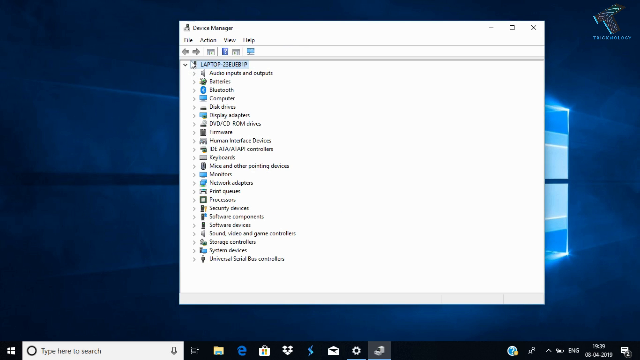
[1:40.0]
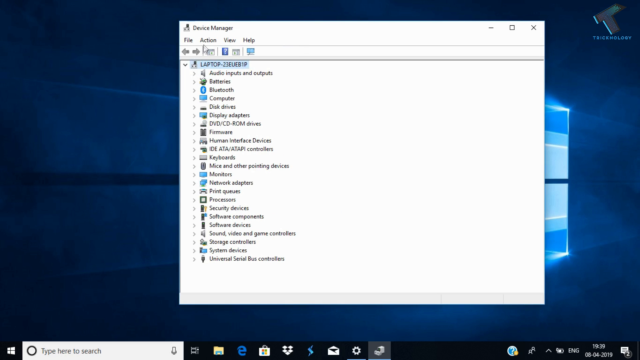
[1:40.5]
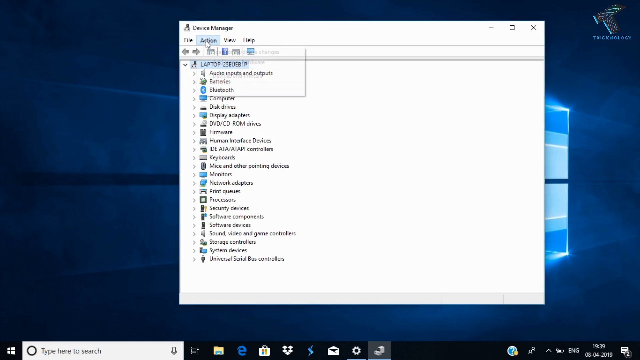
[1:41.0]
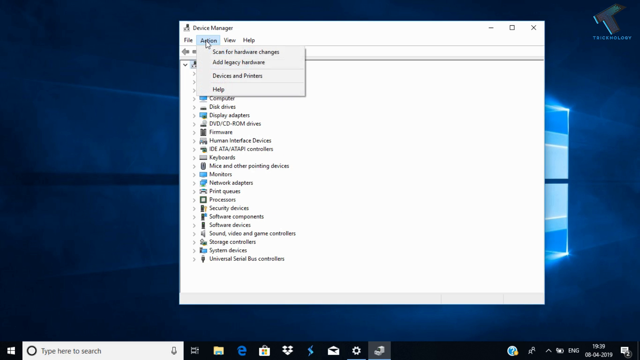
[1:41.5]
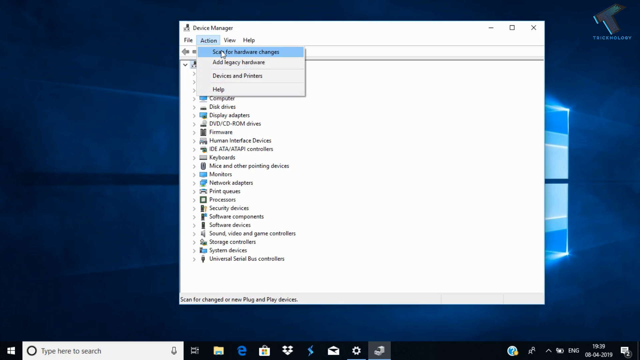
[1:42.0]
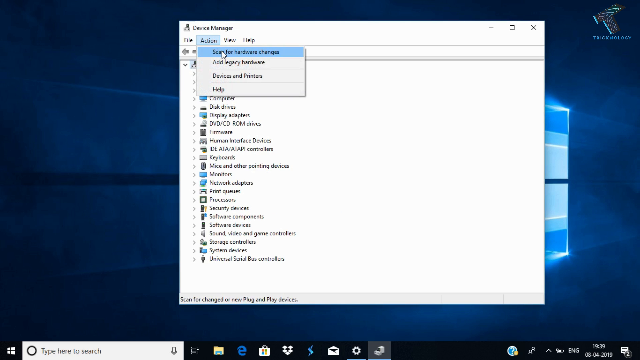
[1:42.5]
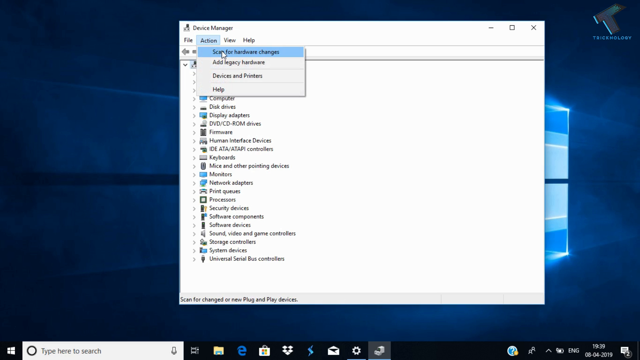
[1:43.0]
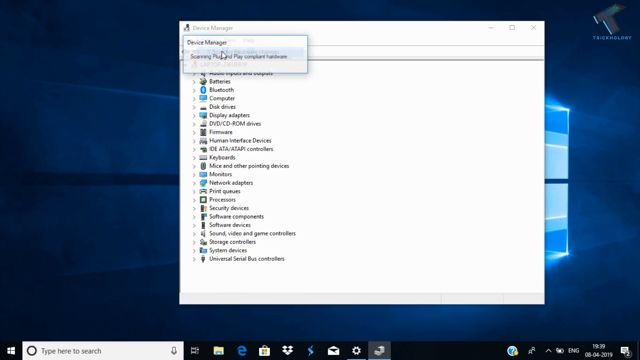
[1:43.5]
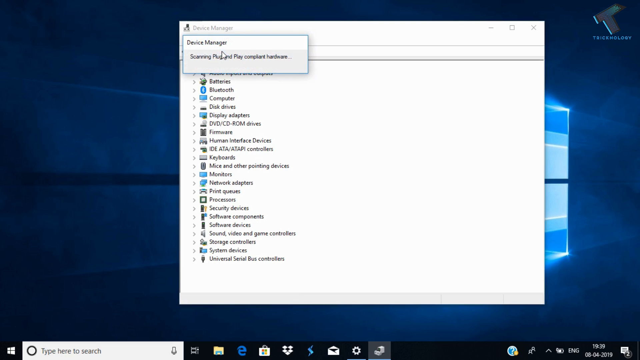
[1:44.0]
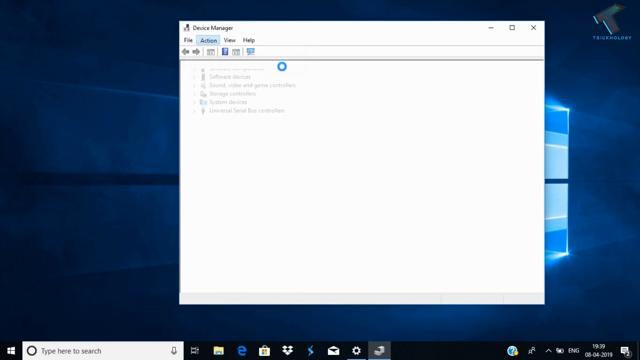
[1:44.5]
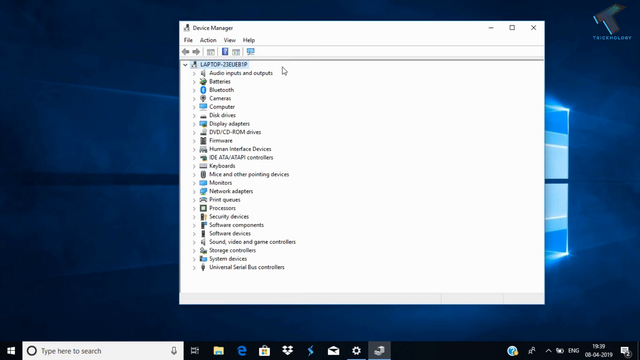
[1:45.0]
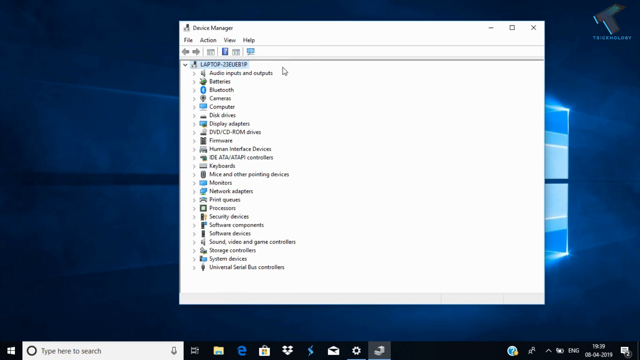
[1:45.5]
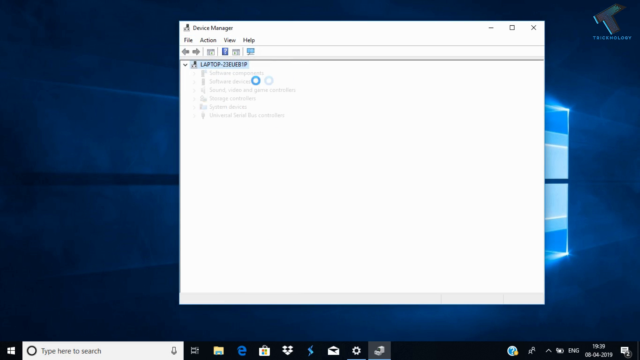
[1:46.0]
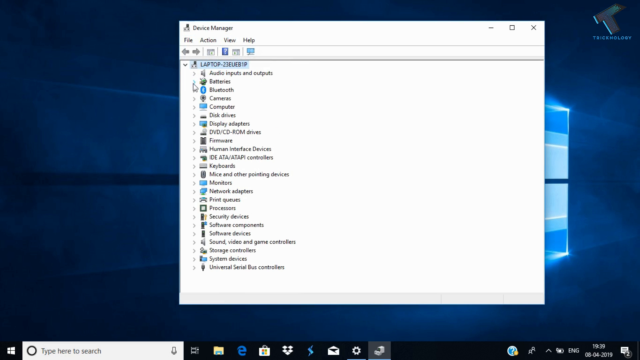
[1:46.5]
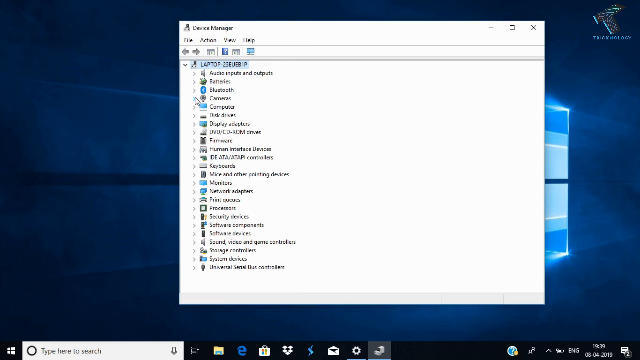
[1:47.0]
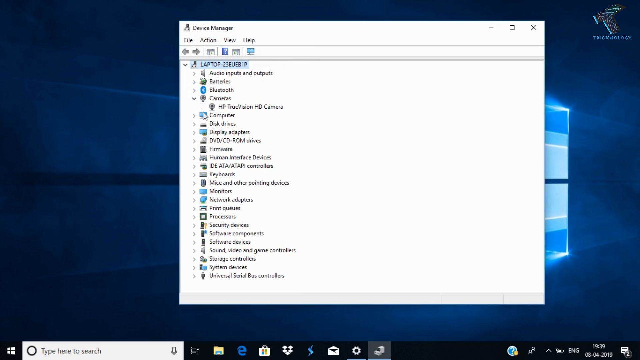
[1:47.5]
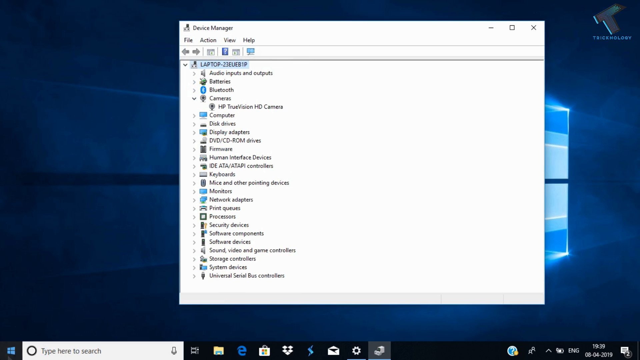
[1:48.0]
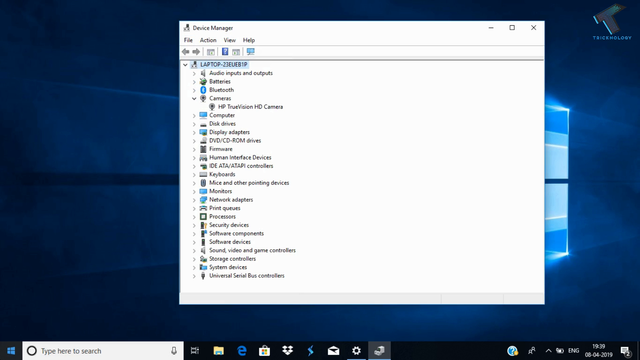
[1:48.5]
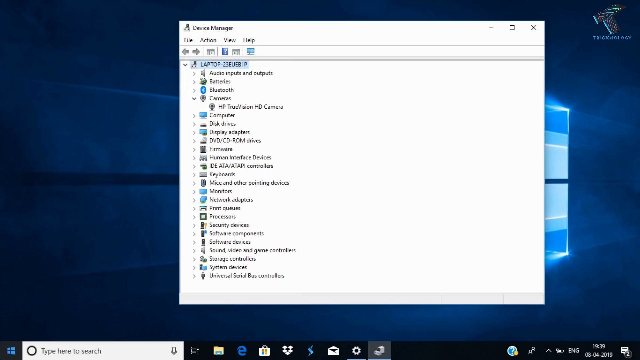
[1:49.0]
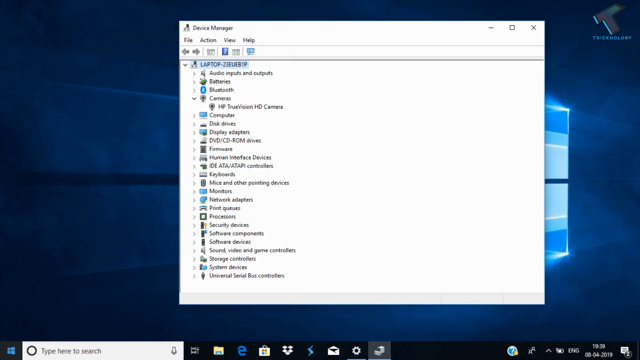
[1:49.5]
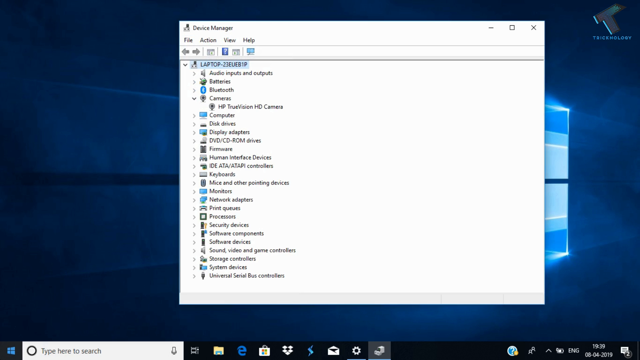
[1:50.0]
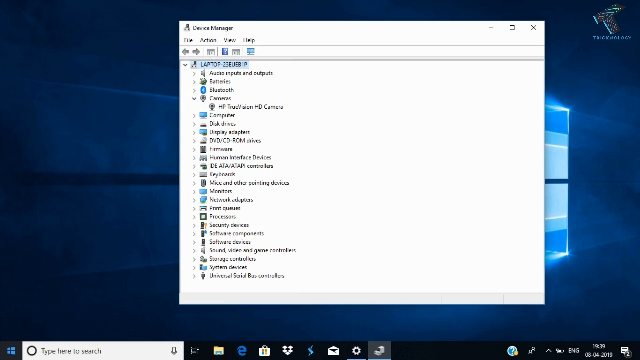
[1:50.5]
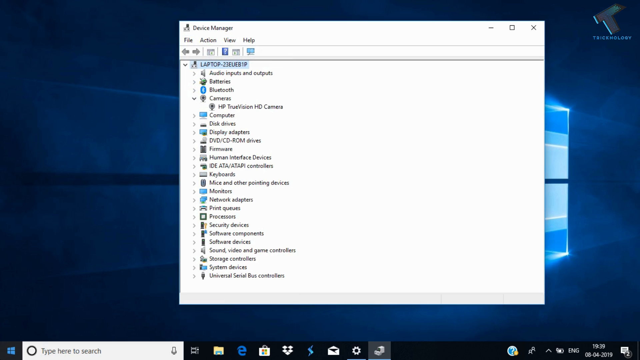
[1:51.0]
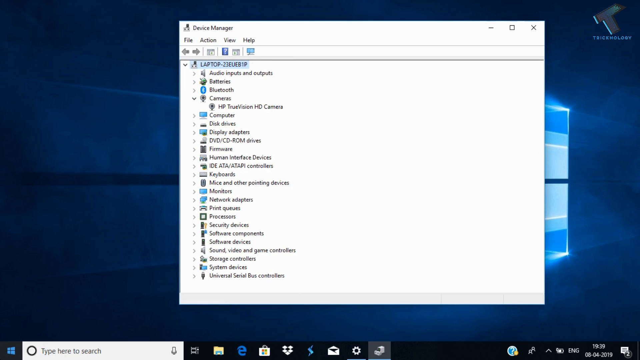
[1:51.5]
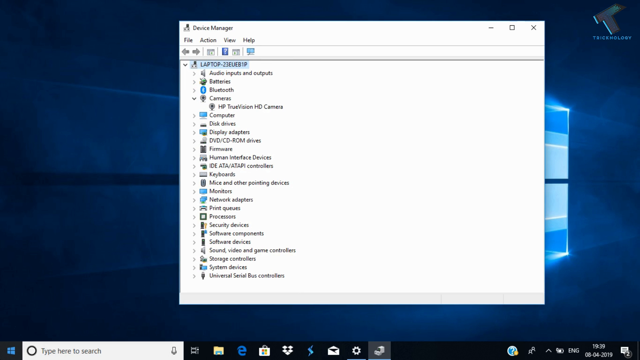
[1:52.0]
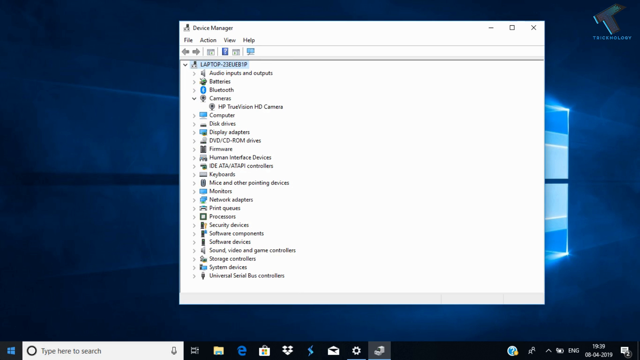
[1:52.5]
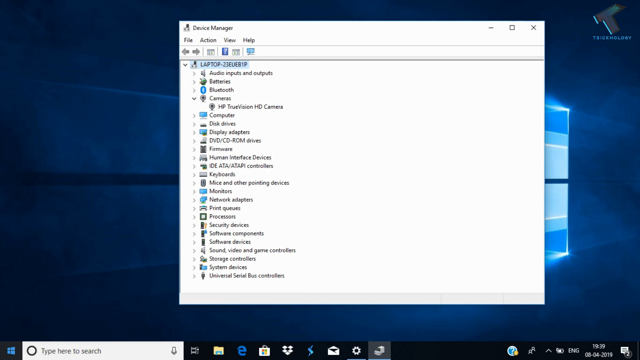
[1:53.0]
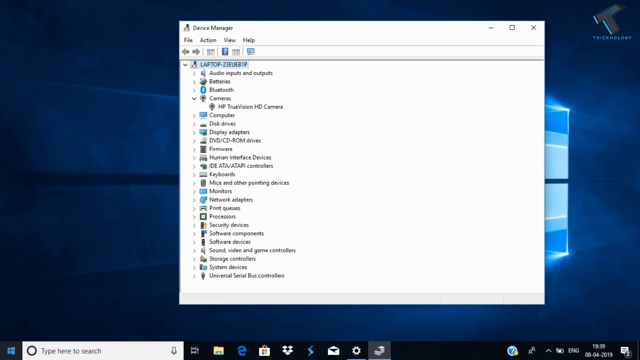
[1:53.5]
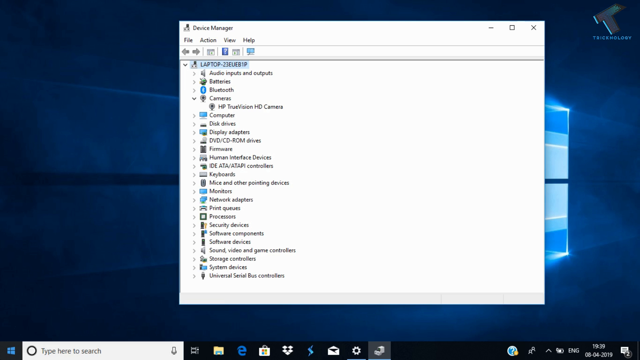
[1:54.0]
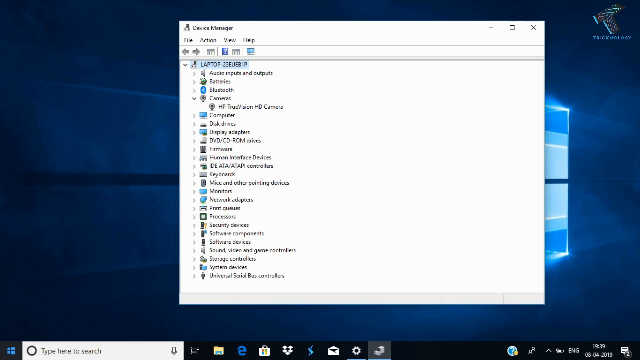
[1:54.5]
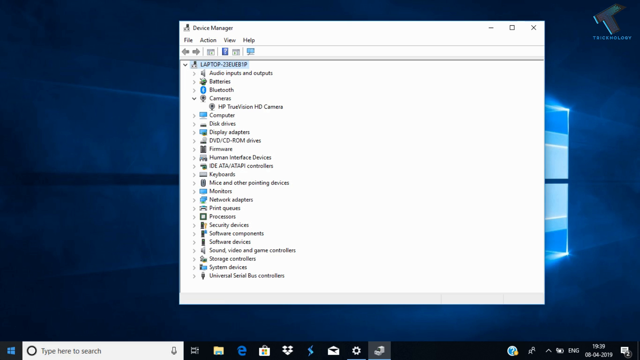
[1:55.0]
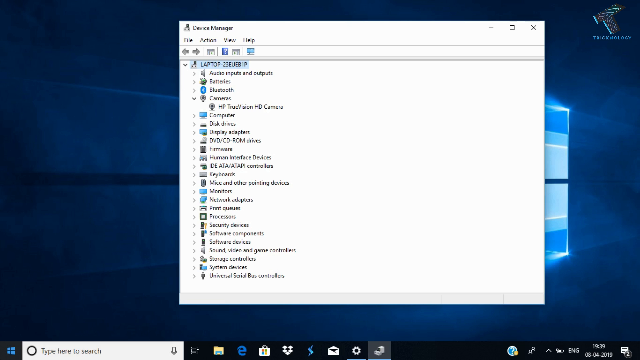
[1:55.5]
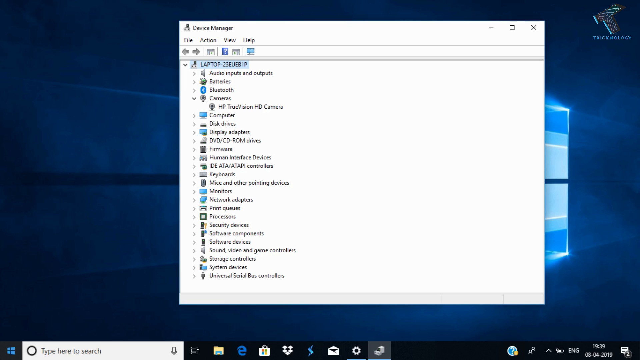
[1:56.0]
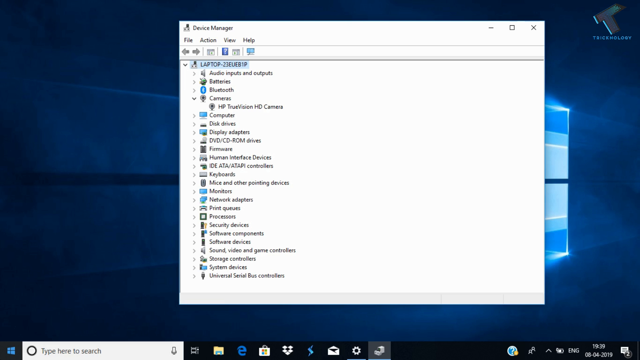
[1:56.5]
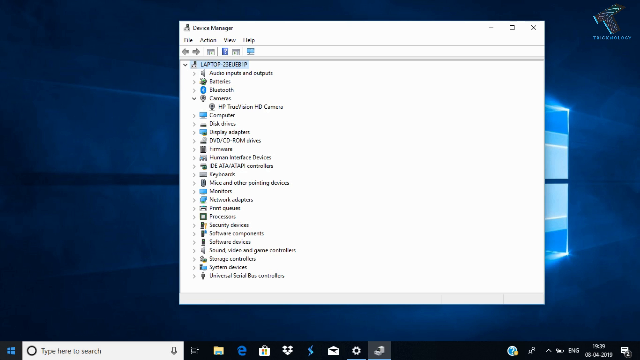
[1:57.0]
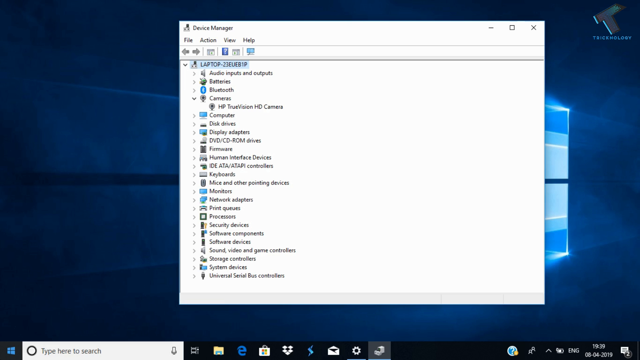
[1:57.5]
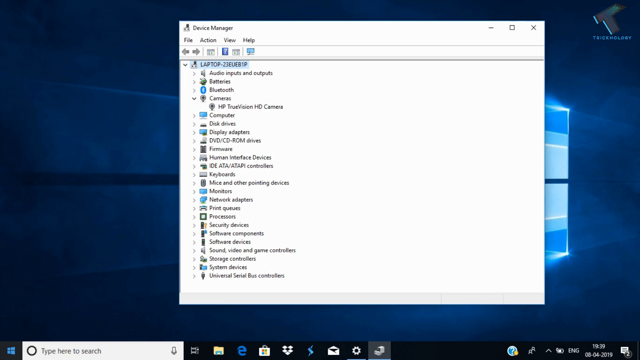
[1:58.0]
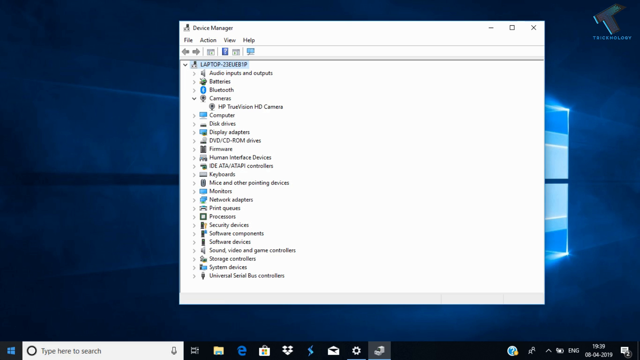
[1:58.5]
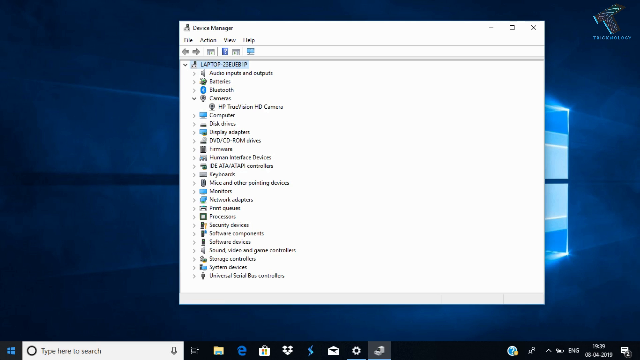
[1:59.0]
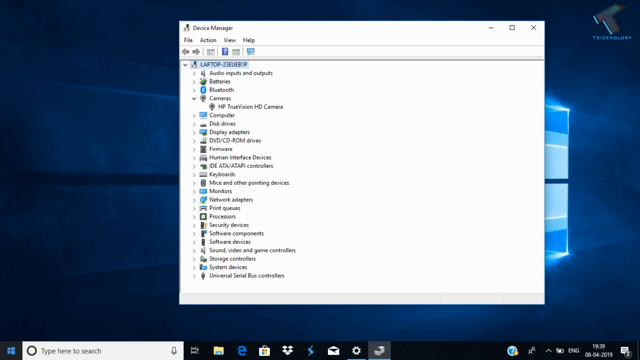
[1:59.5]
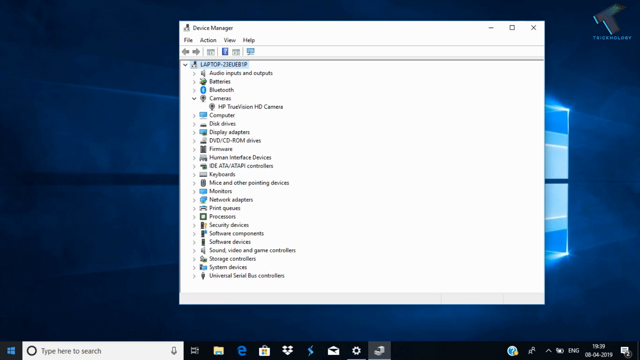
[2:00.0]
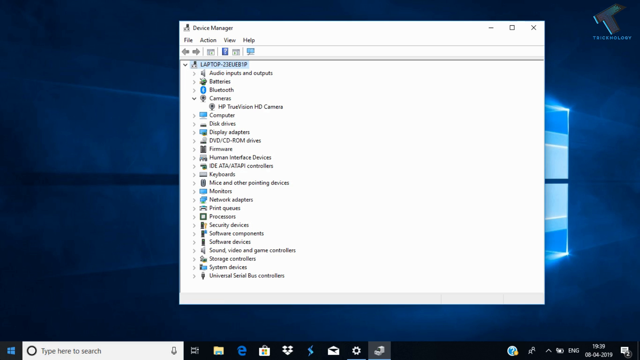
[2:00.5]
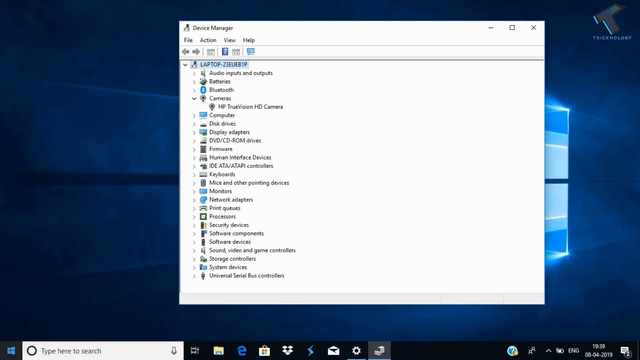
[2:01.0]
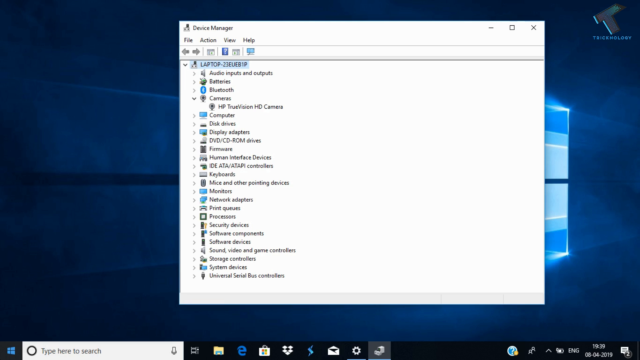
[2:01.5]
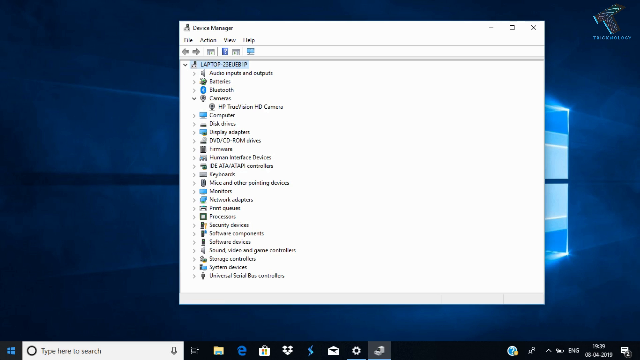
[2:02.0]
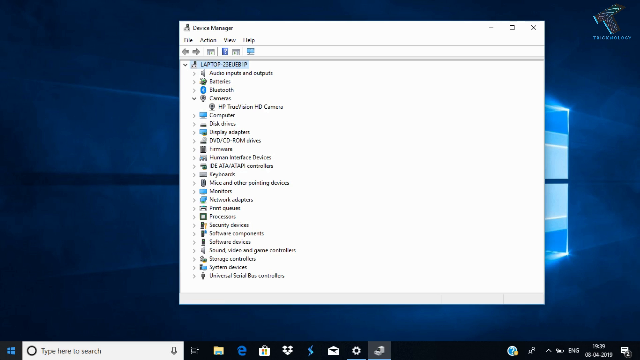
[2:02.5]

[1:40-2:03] The desktop manager box is in the middle of the desktop screen, showing the icons included under it. The cursor hovers up and down and clicks on something. The video then pauses and stays on this screen for a while. The screen is a little hard to read because the video is quite small. Overall it appears to be a step-by-step tutorial on how to enable certain apps on a laptop.